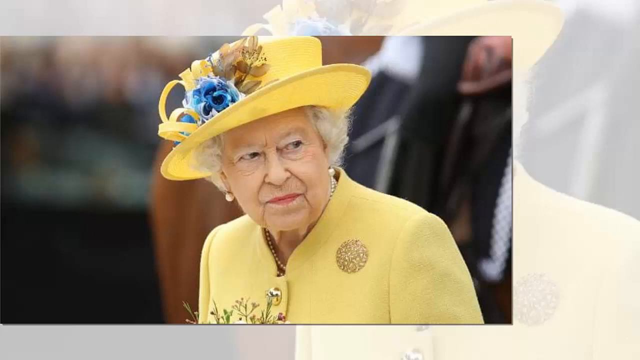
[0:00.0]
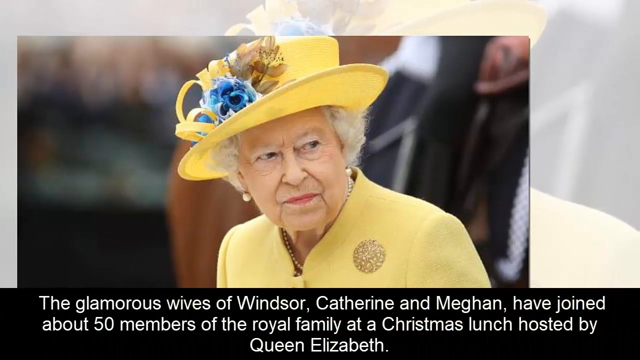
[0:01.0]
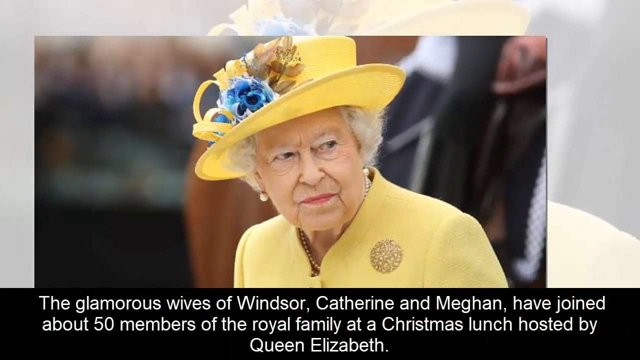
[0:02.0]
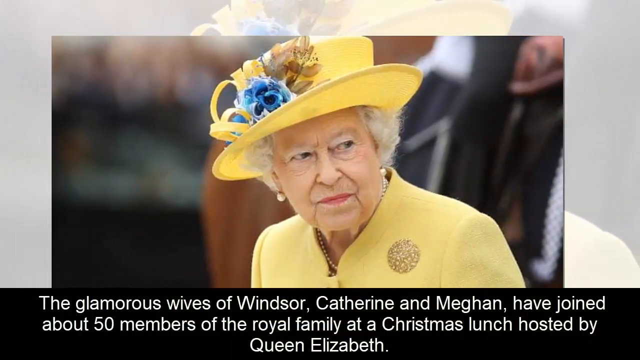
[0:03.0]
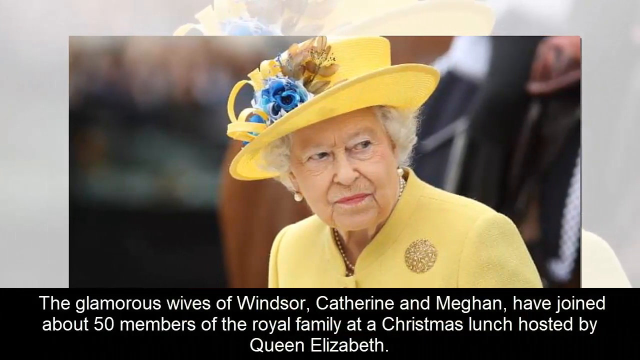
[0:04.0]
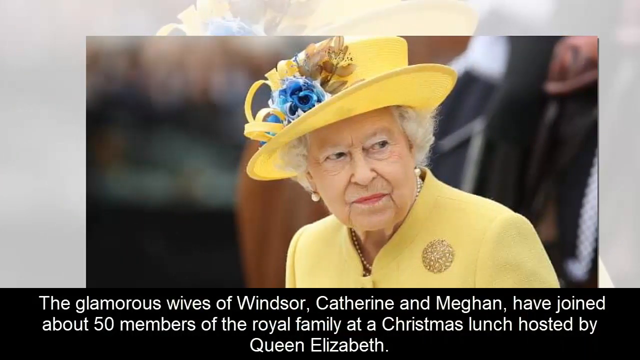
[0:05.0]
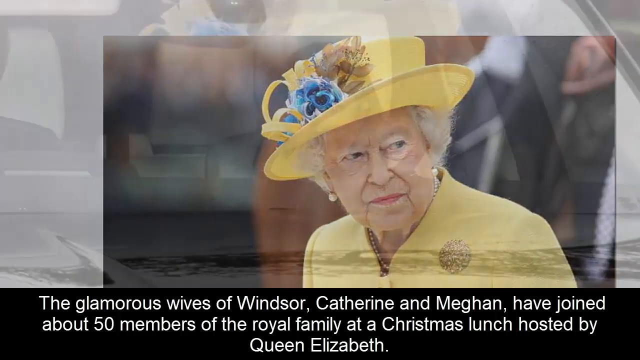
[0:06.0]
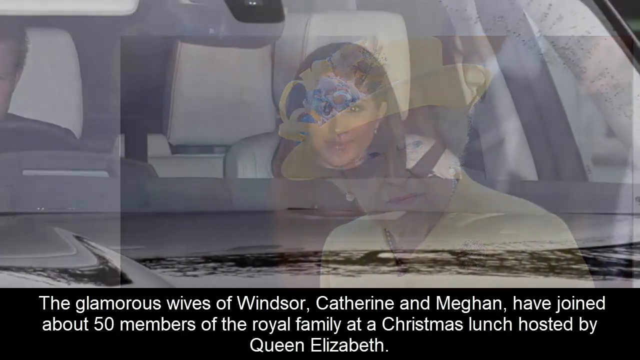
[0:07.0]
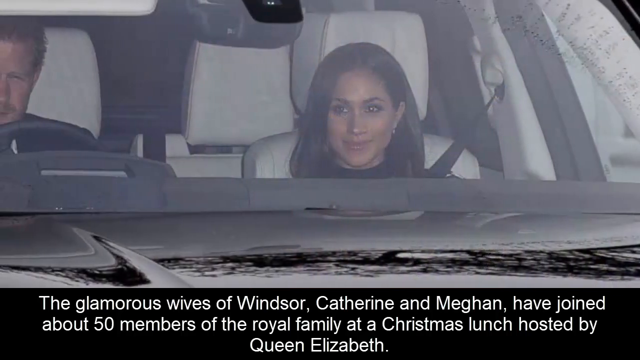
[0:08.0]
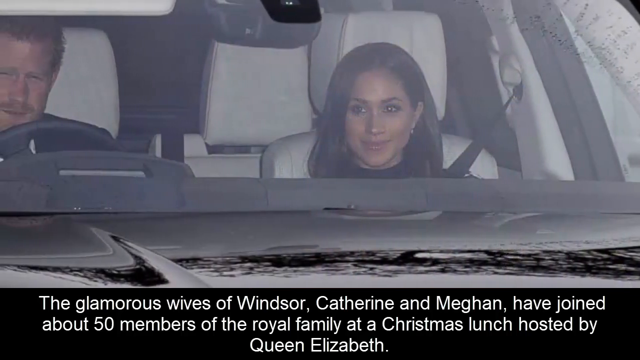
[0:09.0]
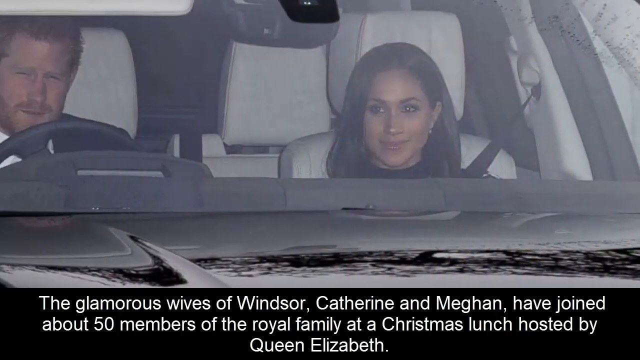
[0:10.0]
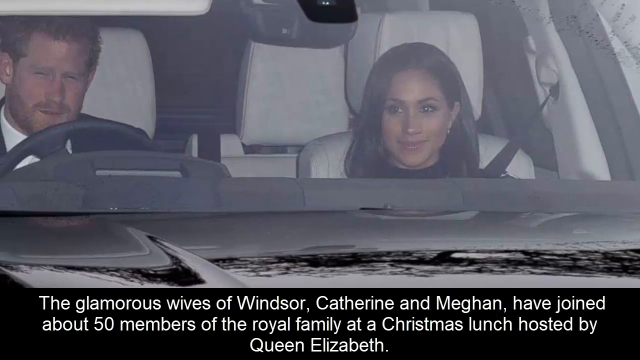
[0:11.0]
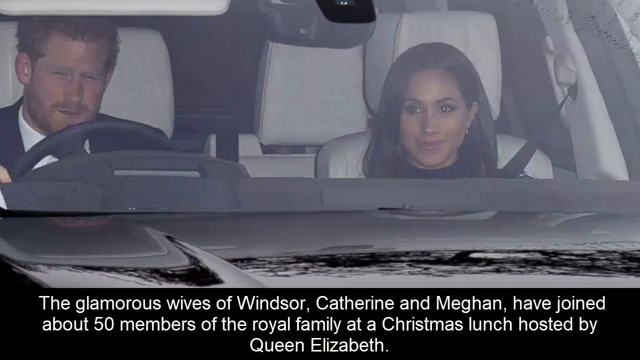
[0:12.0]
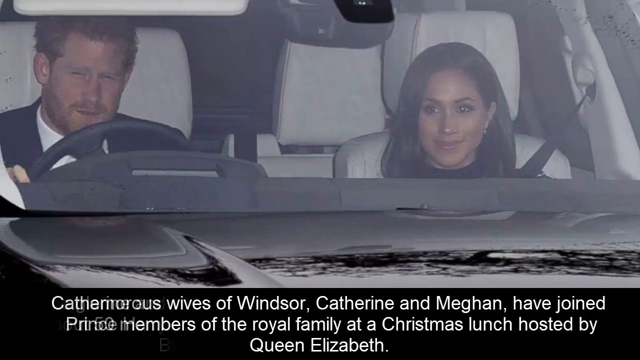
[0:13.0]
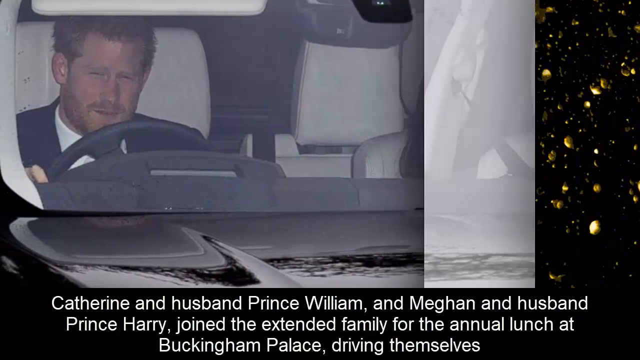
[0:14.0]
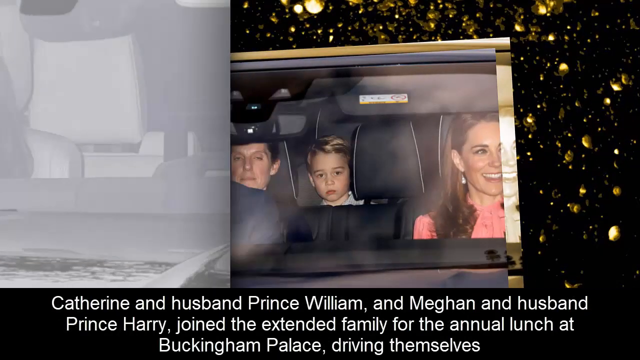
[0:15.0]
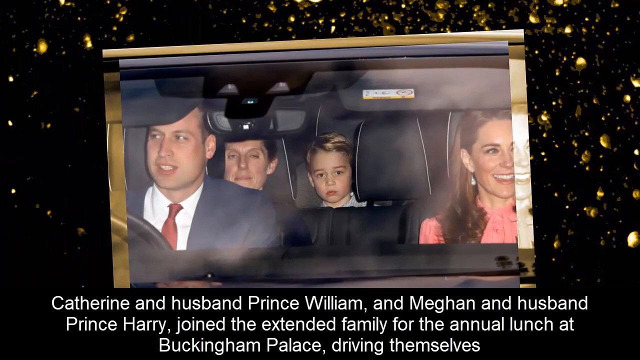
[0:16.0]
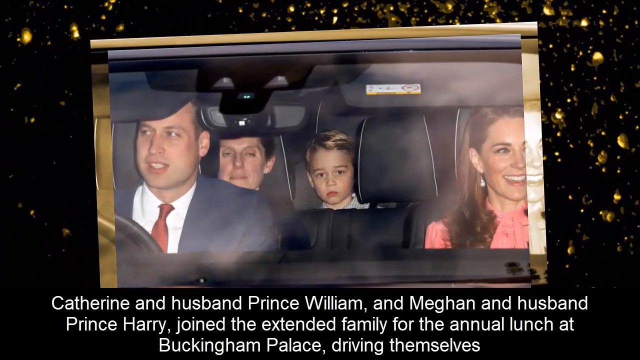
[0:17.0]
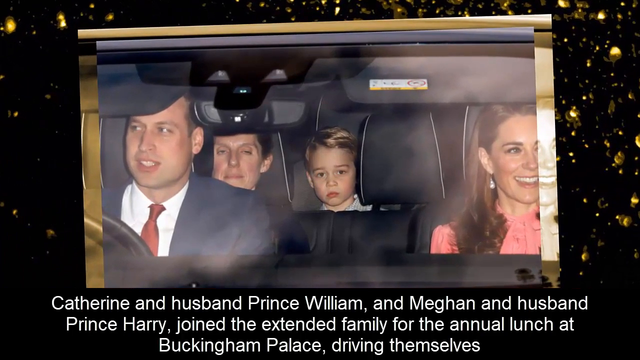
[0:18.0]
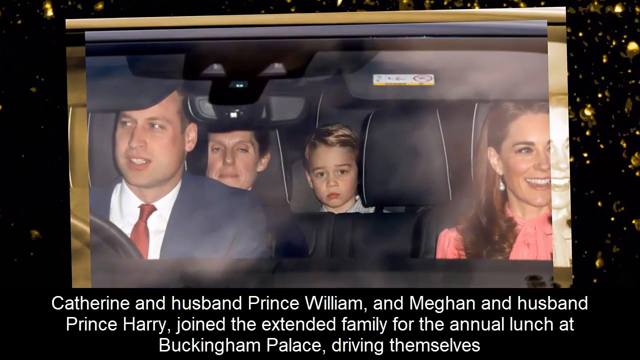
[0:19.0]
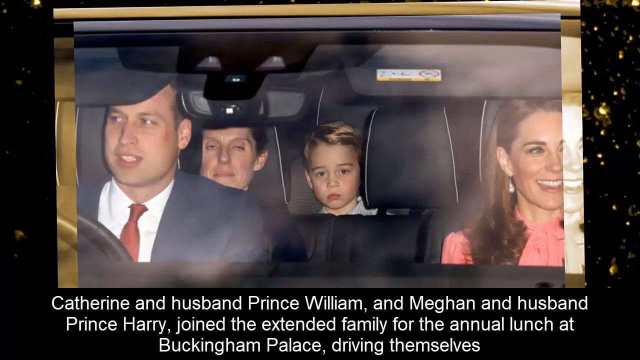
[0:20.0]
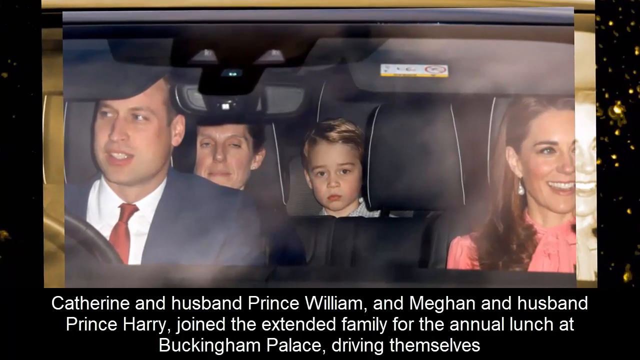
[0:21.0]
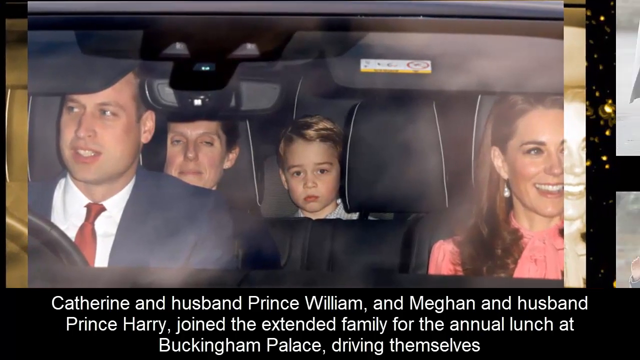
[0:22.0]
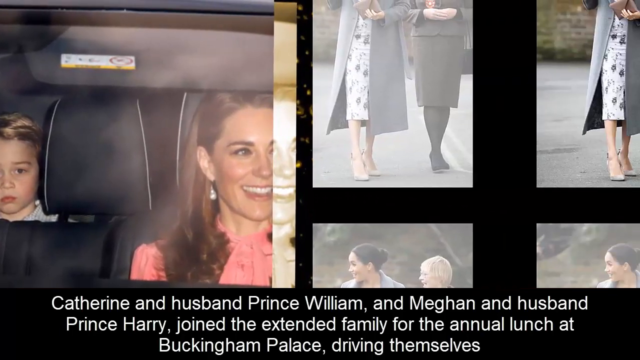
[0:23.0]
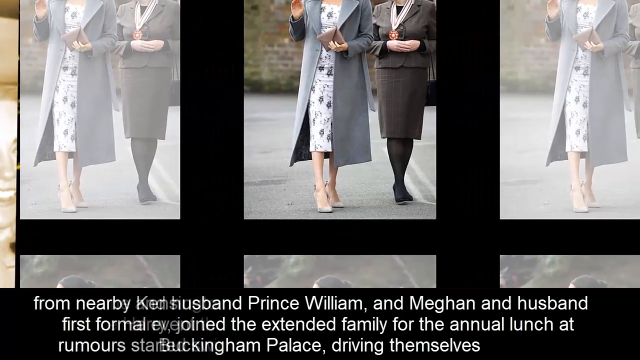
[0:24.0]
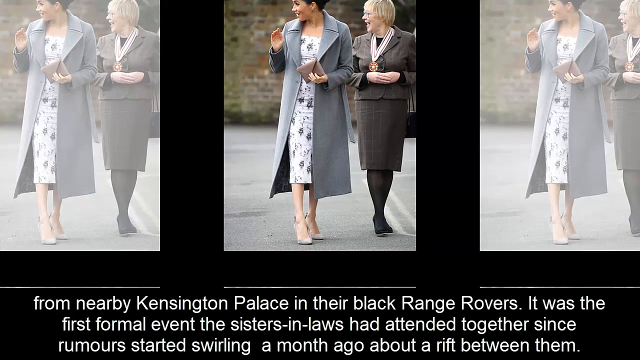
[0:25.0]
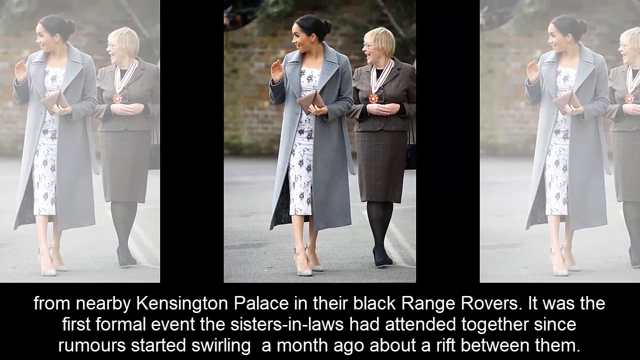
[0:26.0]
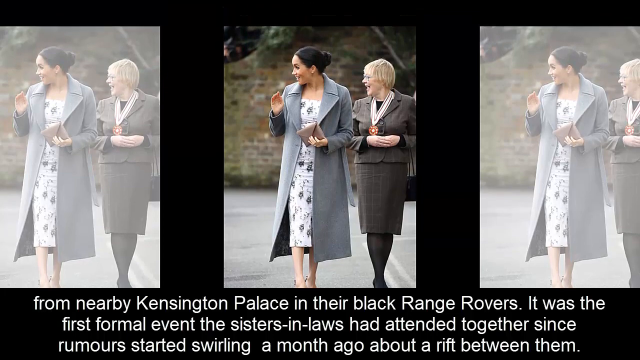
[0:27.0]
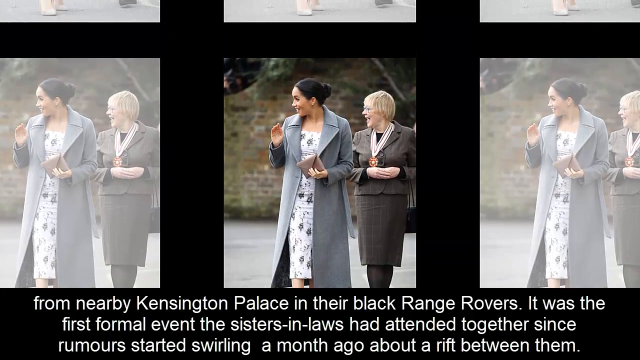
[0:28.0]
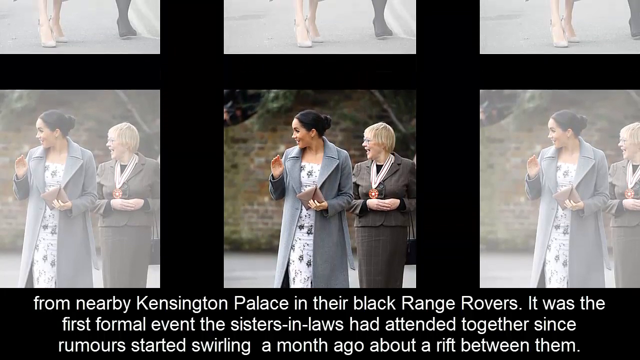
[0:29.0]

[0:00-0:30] The video opens on a short image of Queen Elizabeth wearing a yellow dress, with blue flowers on her head, a pearl necklace and tennis-design earrings. A subtitle appears below that begins "The glamorous wives of" and mentions "a Christmas lunch hosted by Queen Elizabeth". The camera pans to the left of the image. The video cuts to an image of Prince William and his wife Cathy, followed by more images of Prince Harry and his family in a slideshow, and then what look like paparazzi photos of Cathy and a woman who seems to be her mother.